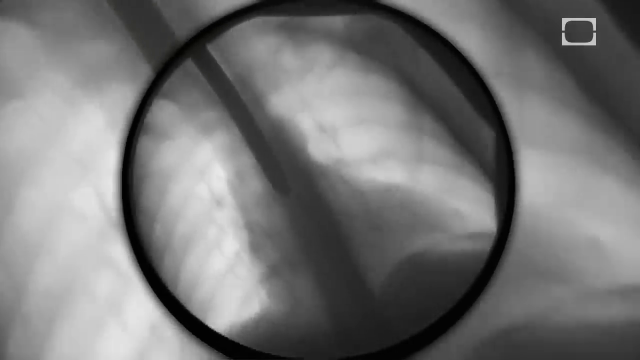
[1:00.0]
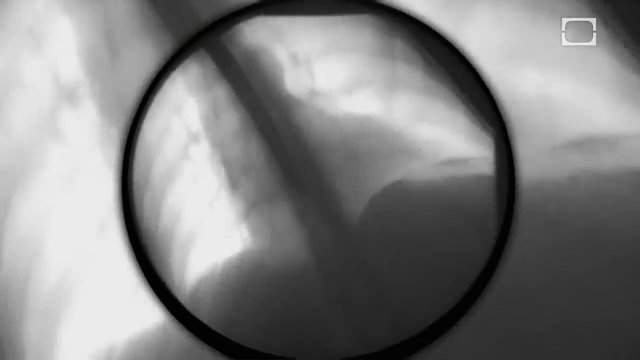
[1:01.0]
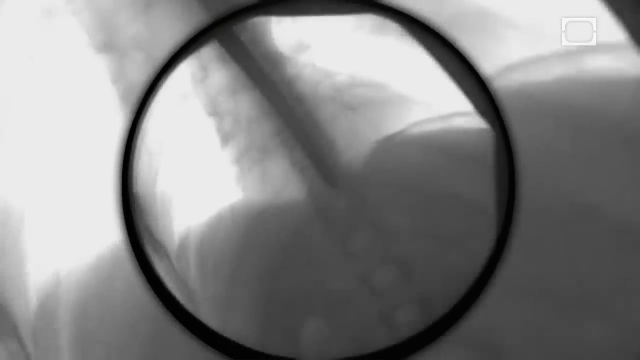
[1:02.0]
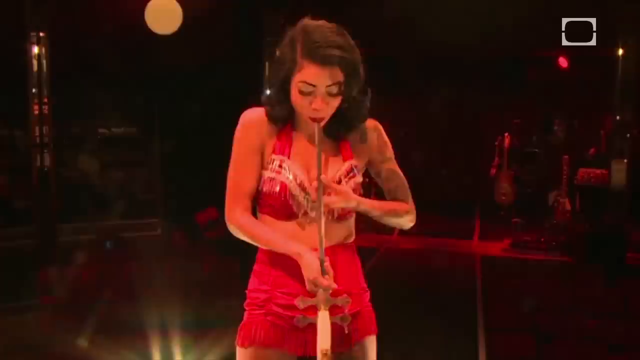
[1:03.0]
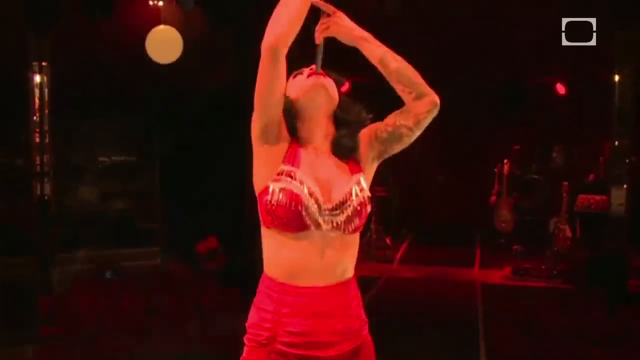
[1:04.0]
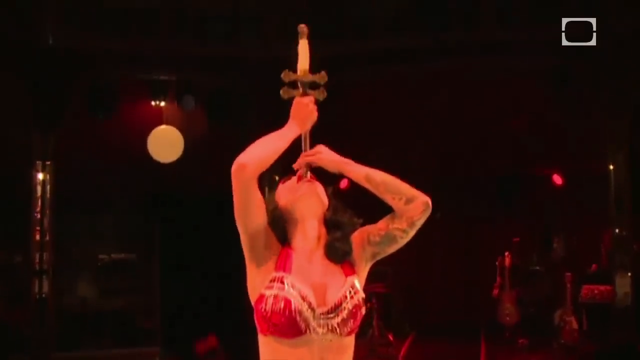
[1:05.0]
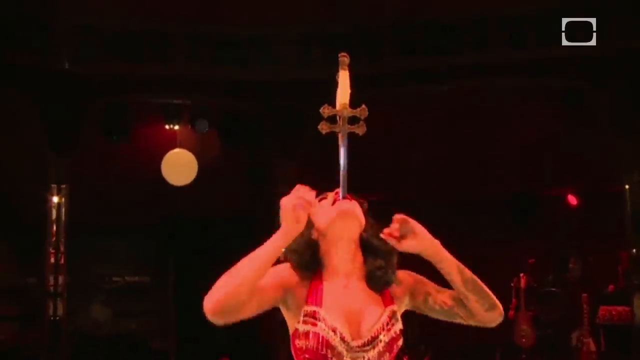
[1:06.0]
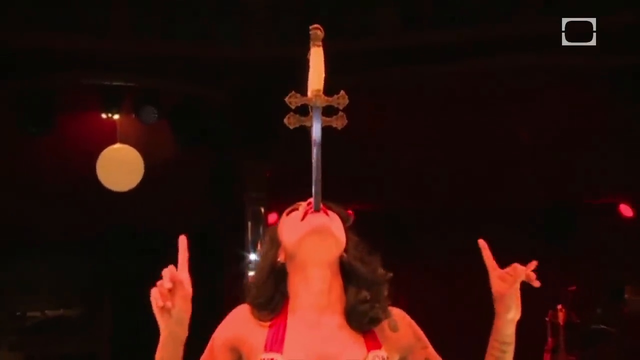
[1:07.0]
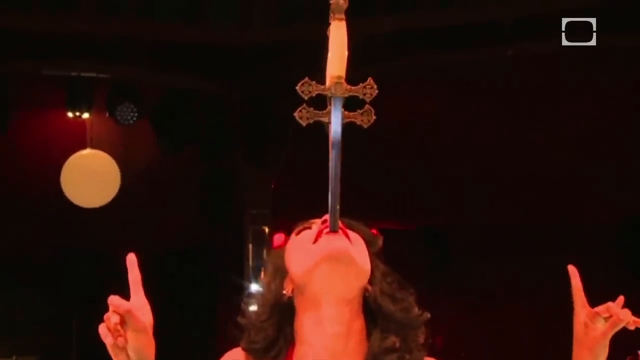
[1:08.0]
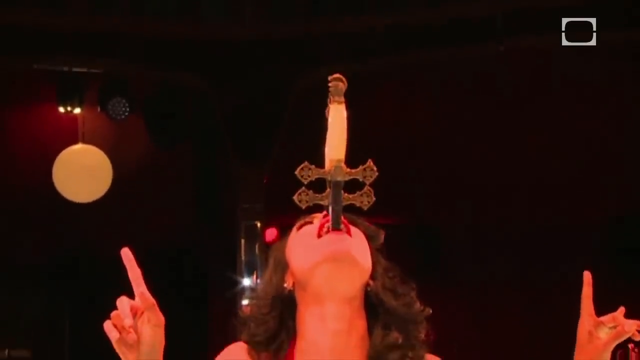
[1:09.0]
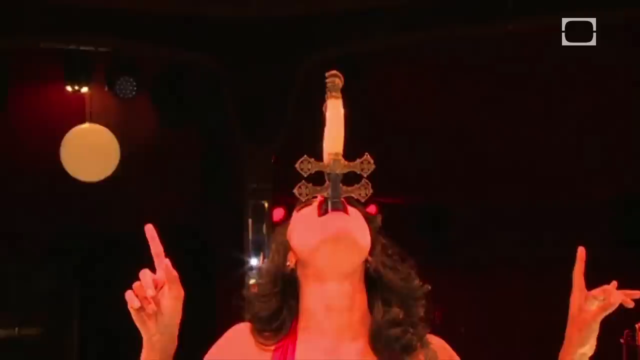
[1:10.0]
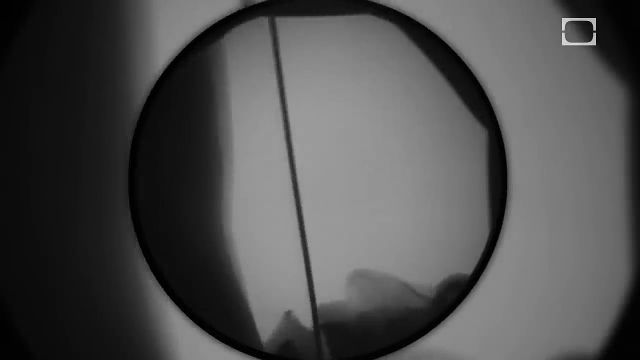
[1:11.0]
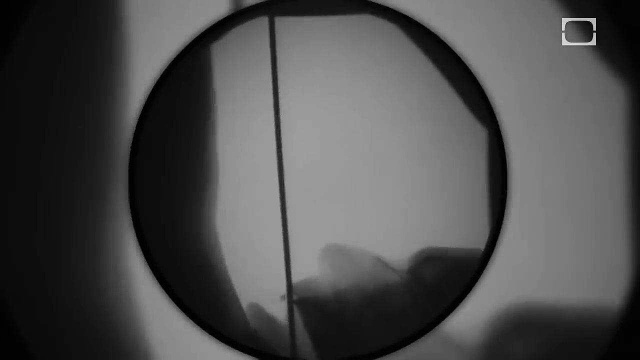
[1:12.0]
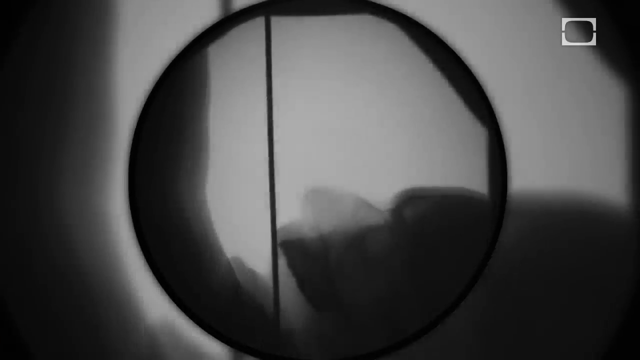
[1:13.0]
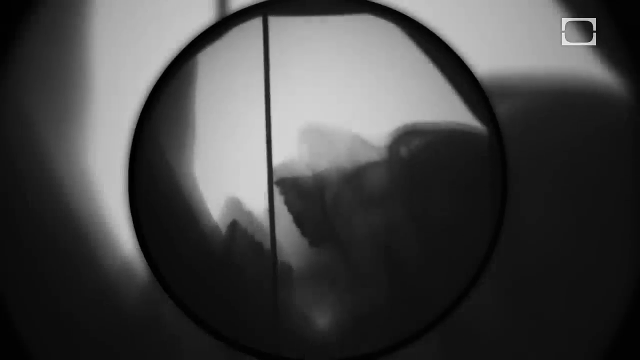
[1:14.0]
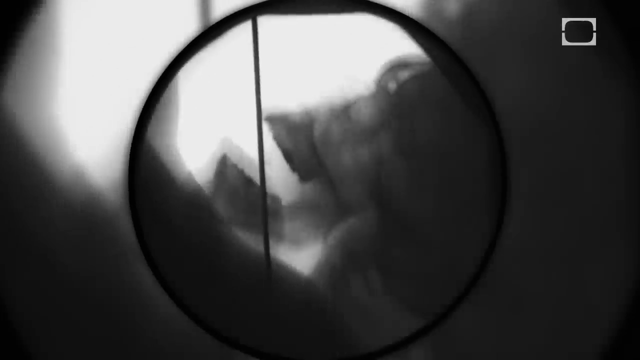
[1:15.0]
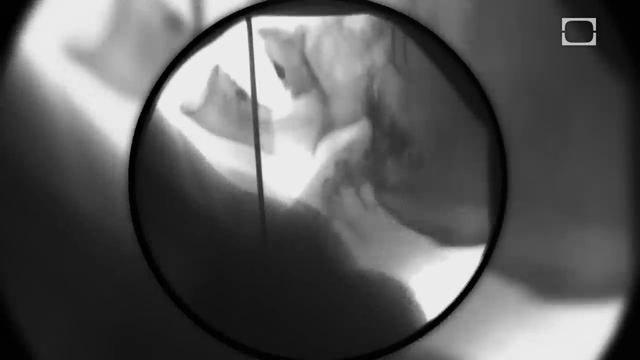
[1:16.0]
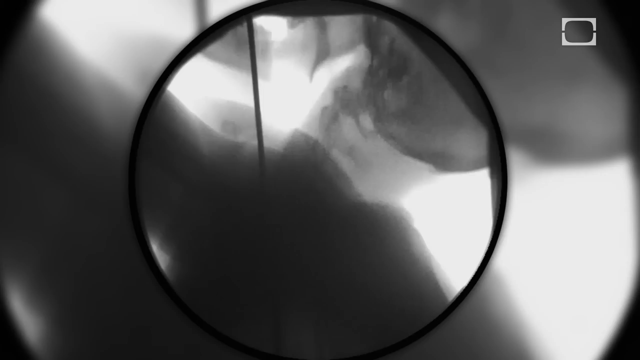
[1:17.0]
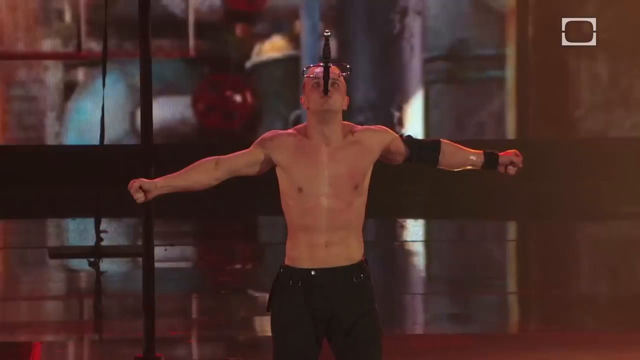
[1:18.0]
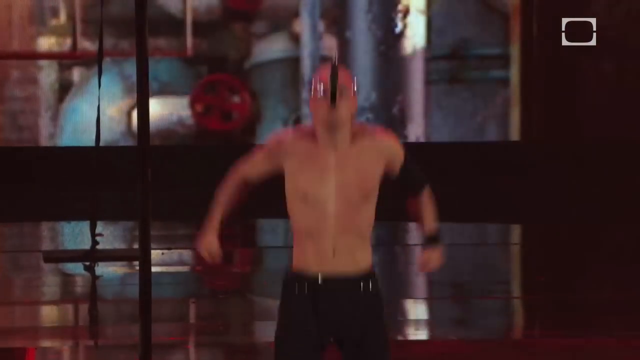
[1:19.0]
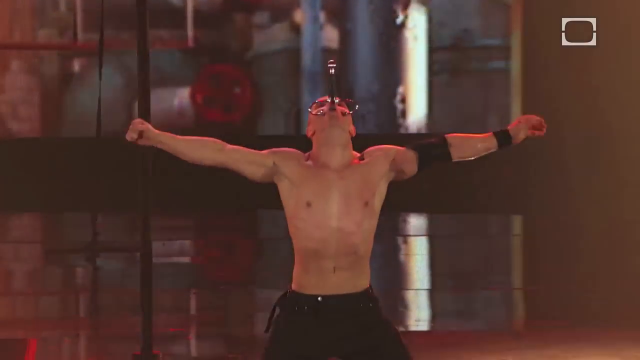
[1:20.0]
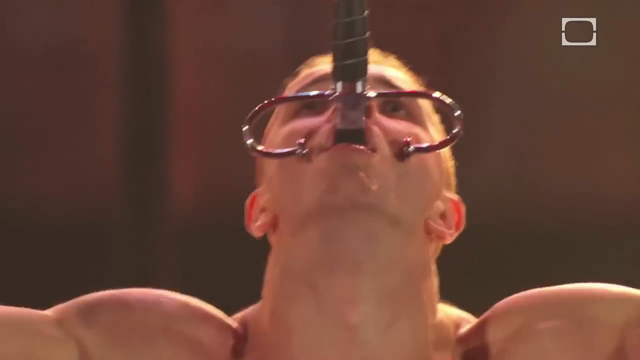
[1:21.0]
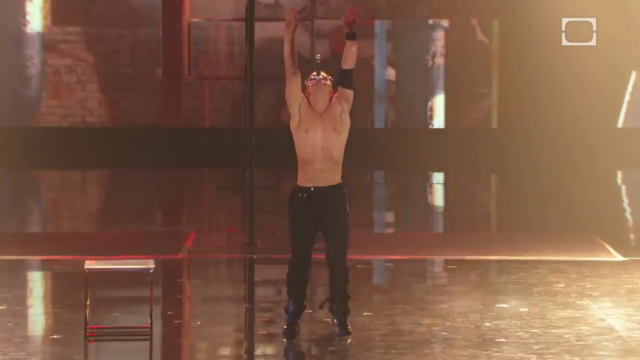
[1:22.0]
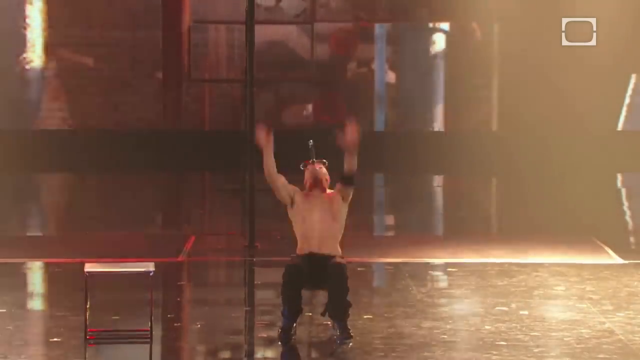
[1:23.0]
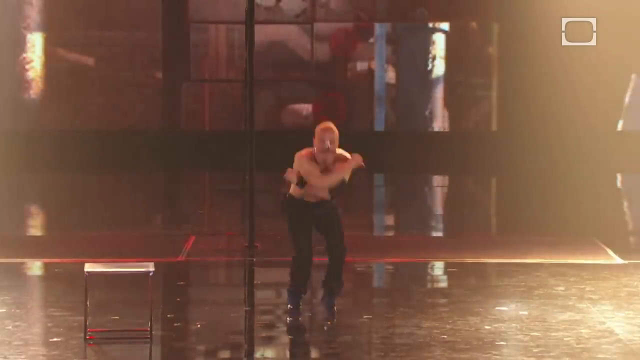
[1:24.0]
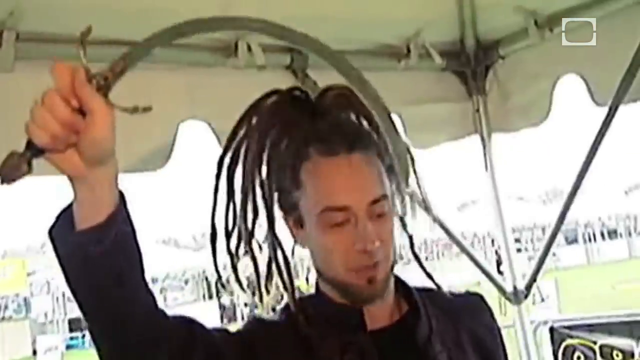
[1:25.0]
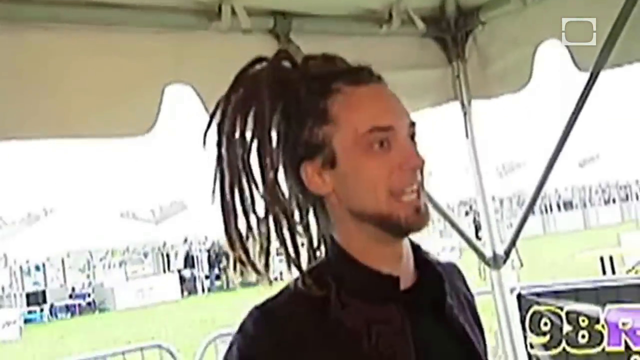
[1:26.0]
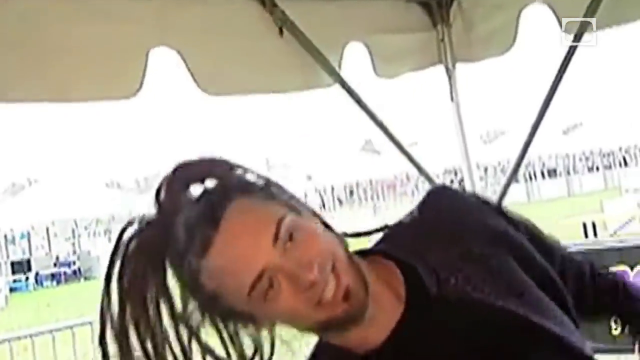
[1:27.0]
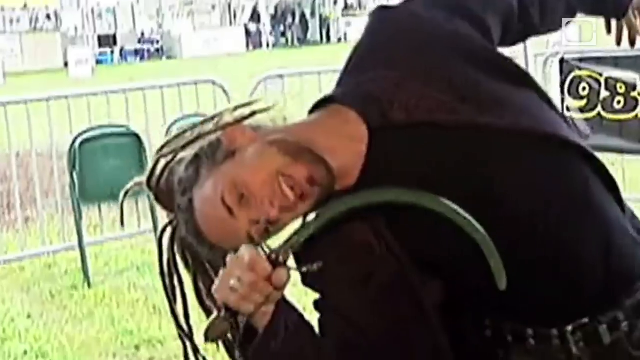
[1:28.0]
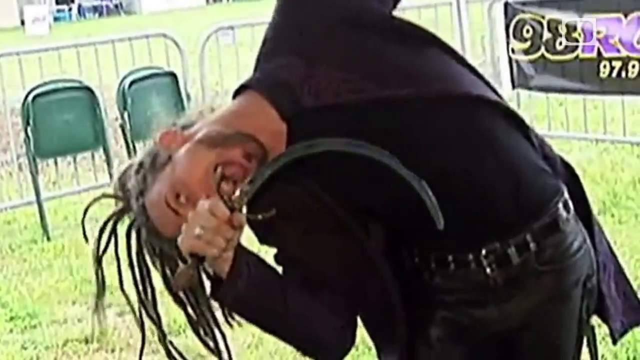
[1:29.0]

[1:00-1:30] A woman in a red beaded costume, apparently at a carnival or some sort of circus, puts a sword with what looks like a double handle into her mouth; she puts half the sword in and eventually the whole sword. A magnified black-and-white X-ray then shows the skull after the sword has entered the mouth, showing how the sword leads down and how the trick works. Another man on stage swallows a whole sword and puts his arms up, apparently doing a show and asking for applause.